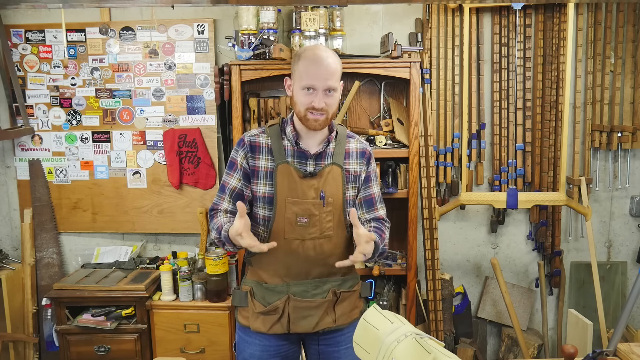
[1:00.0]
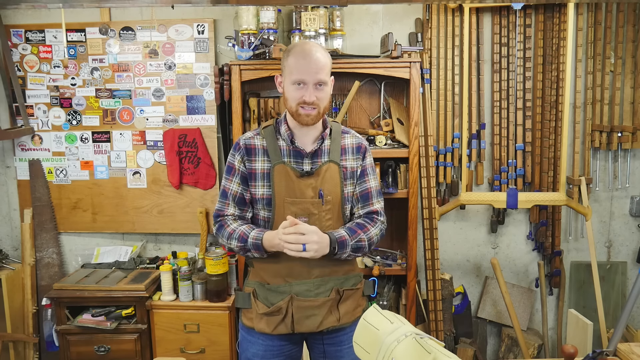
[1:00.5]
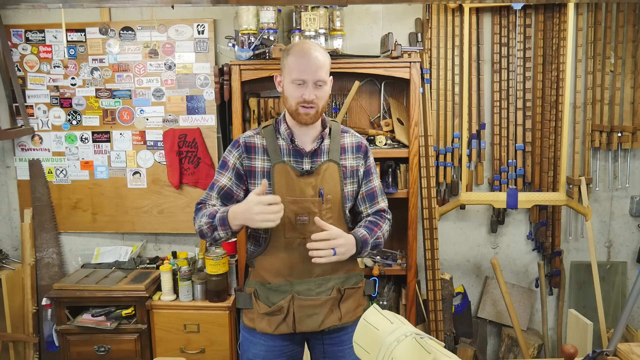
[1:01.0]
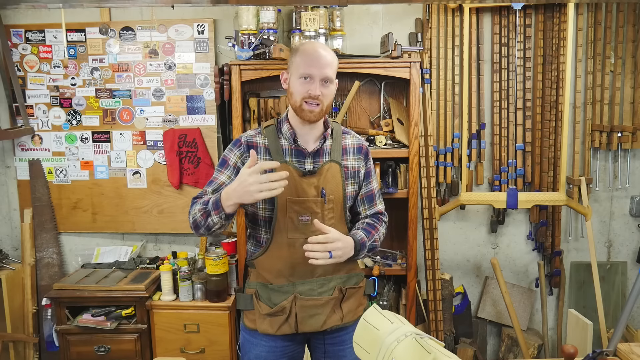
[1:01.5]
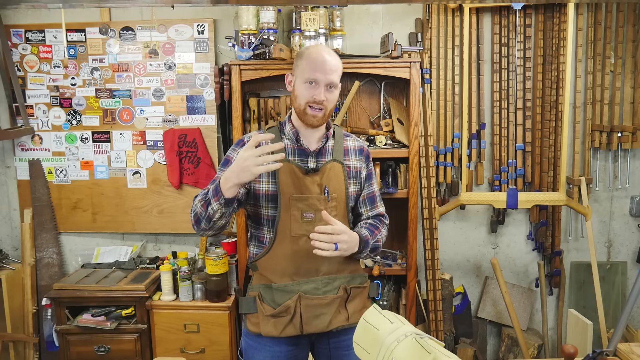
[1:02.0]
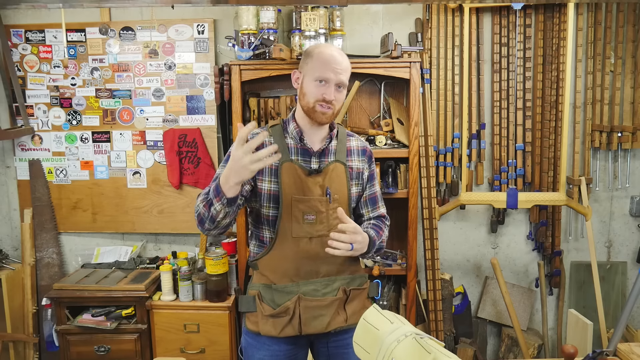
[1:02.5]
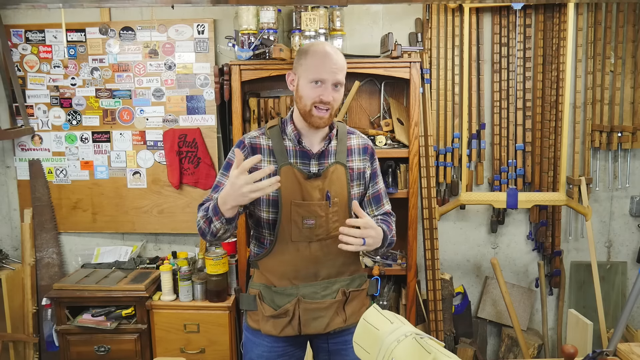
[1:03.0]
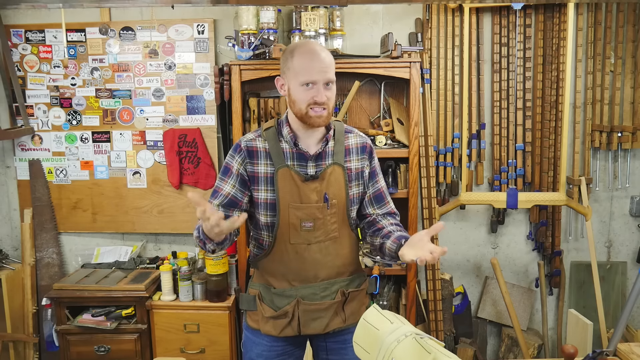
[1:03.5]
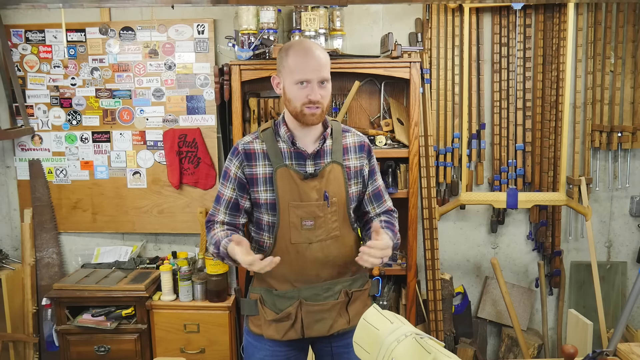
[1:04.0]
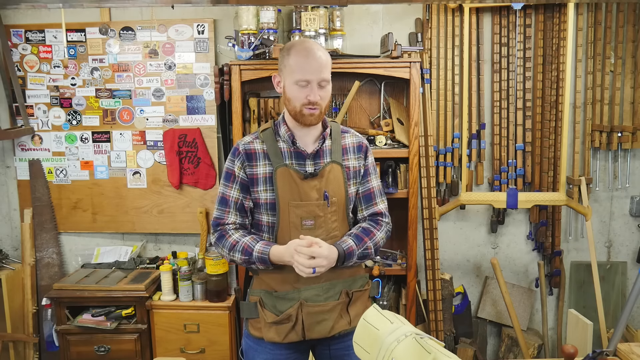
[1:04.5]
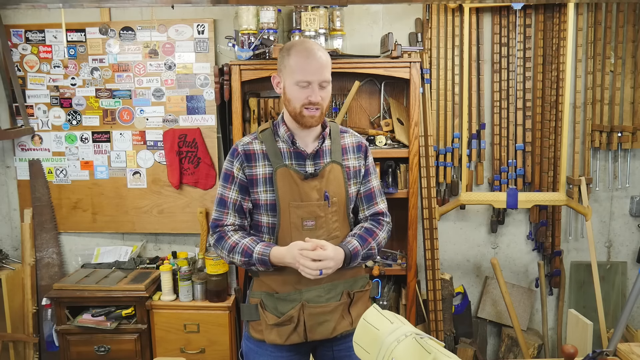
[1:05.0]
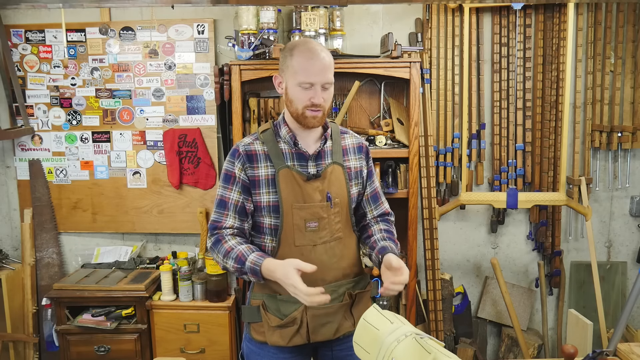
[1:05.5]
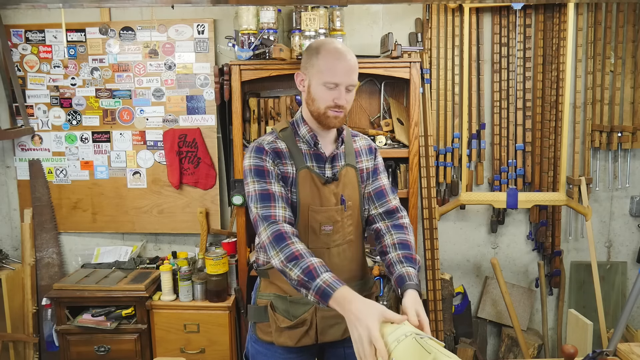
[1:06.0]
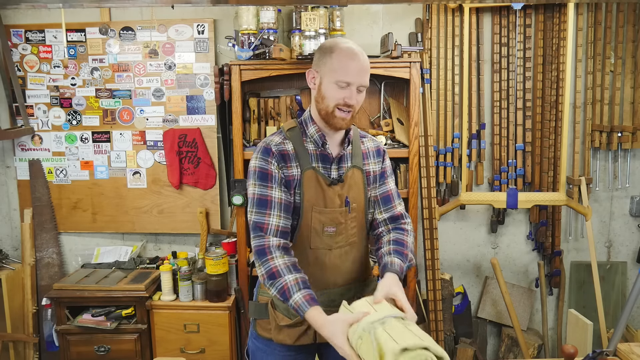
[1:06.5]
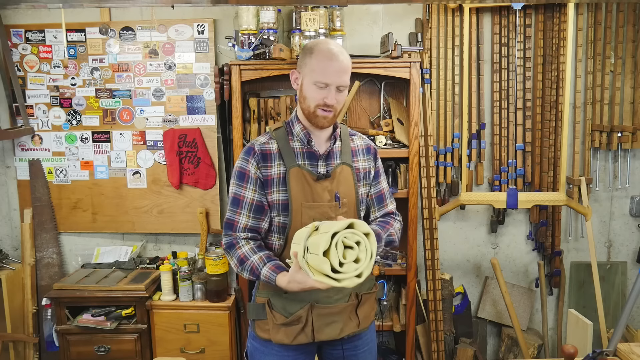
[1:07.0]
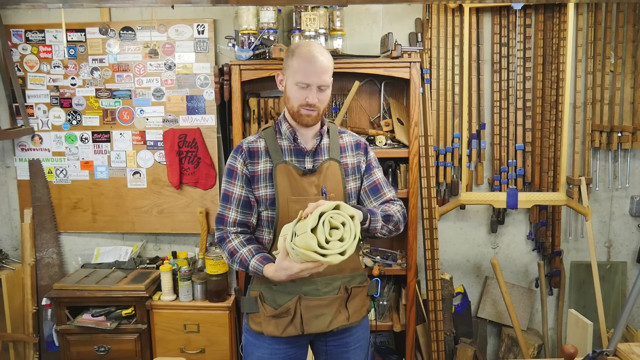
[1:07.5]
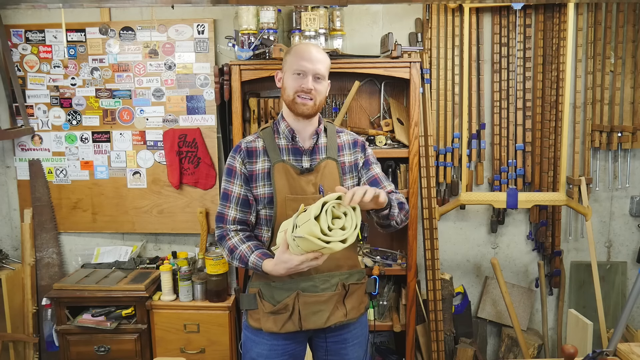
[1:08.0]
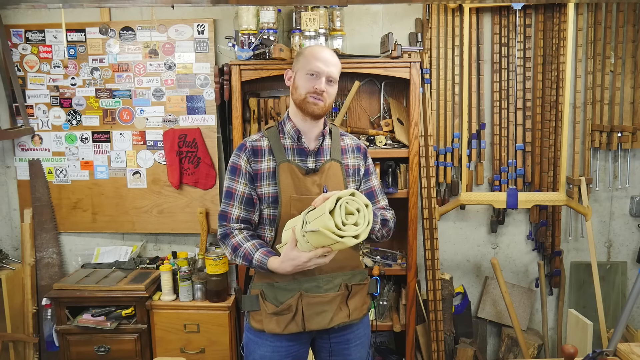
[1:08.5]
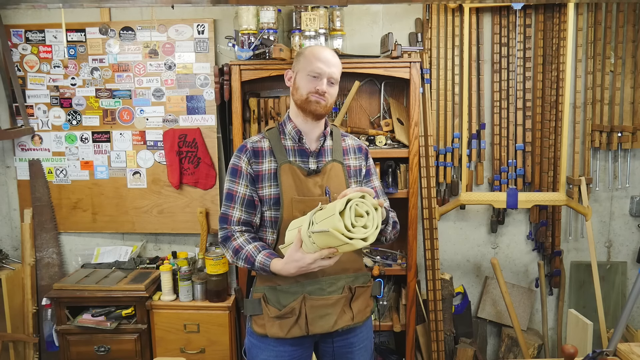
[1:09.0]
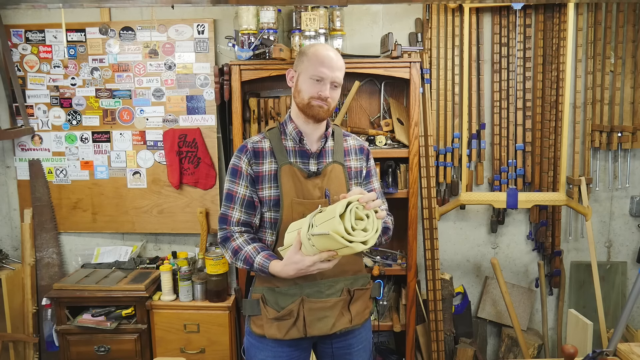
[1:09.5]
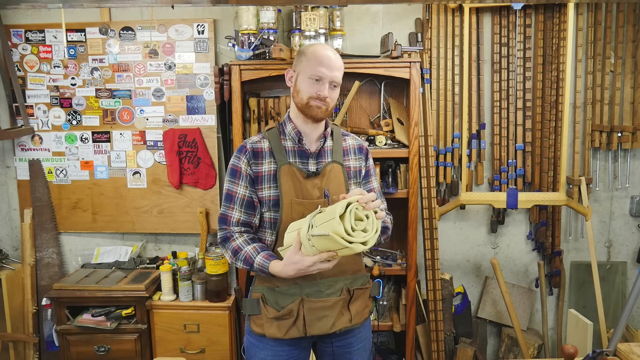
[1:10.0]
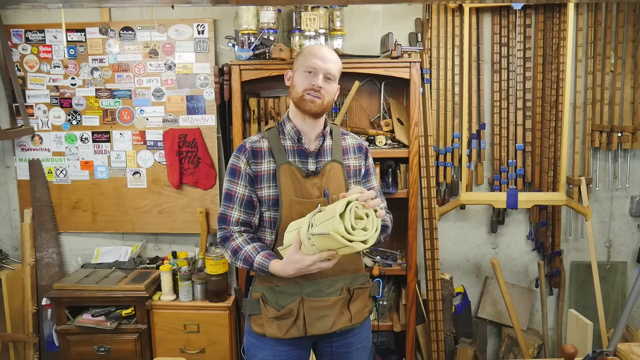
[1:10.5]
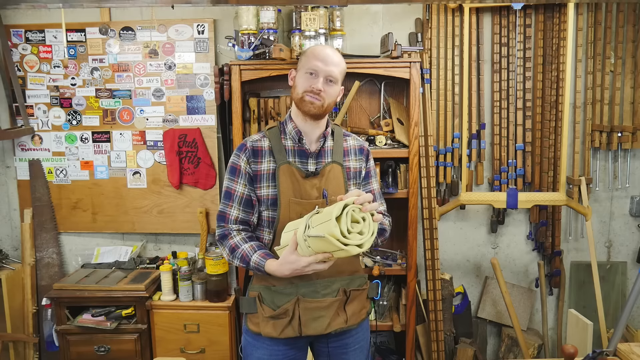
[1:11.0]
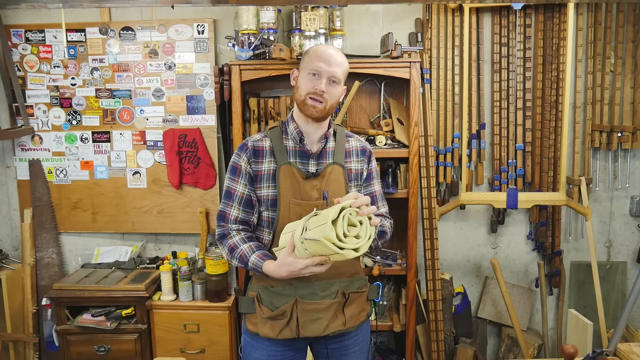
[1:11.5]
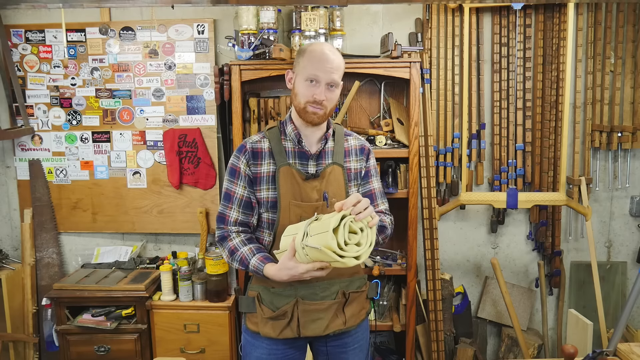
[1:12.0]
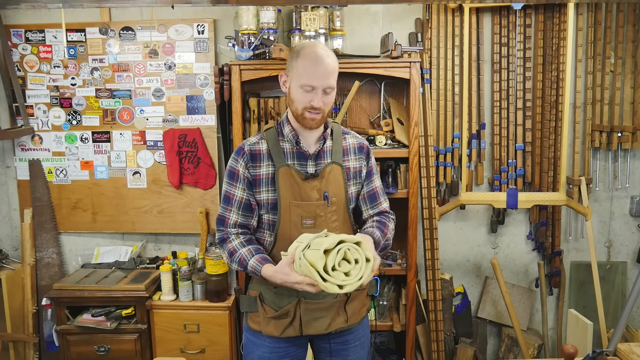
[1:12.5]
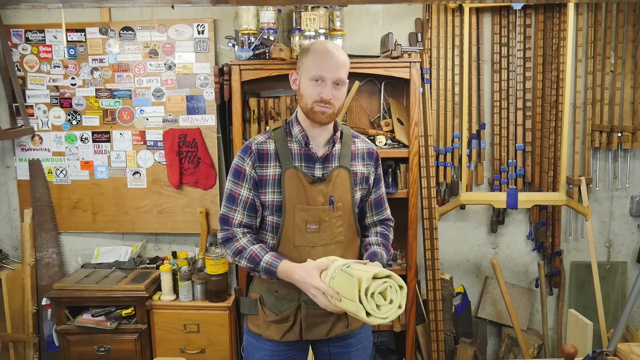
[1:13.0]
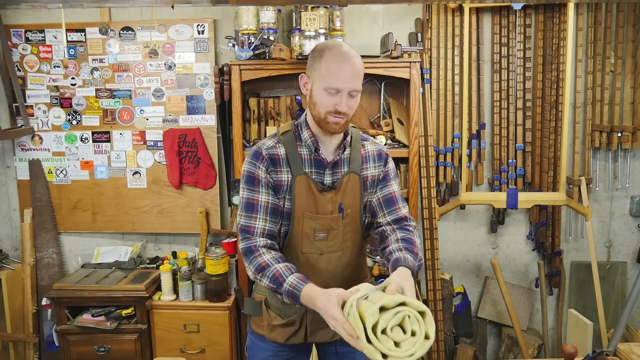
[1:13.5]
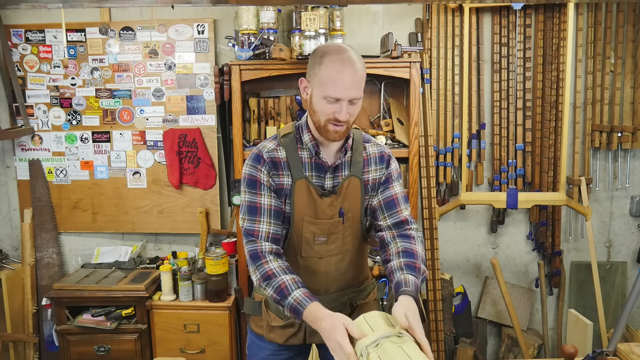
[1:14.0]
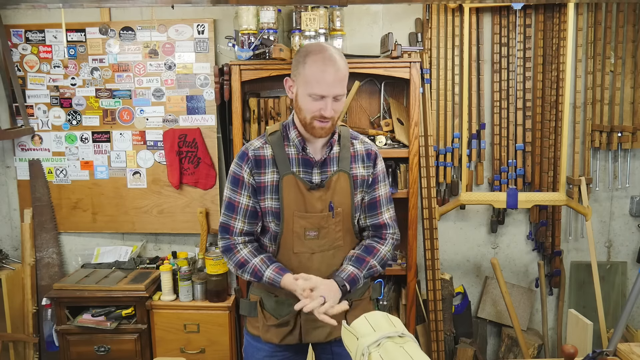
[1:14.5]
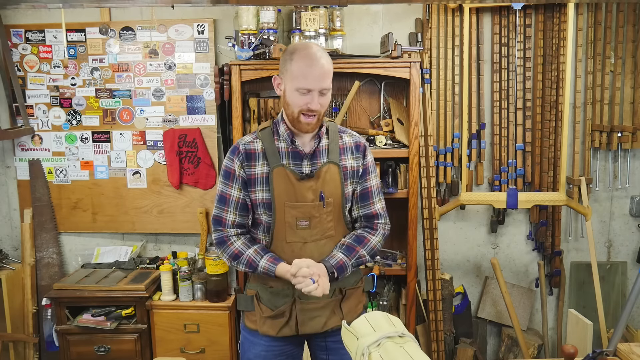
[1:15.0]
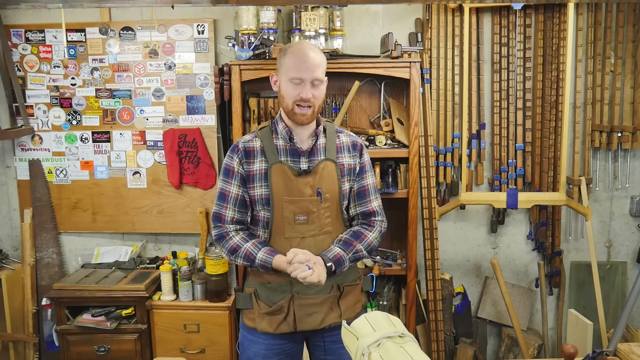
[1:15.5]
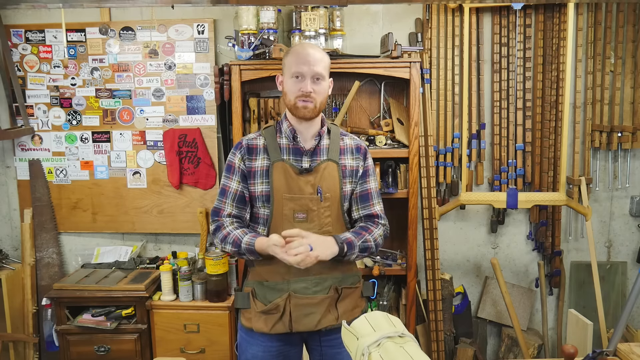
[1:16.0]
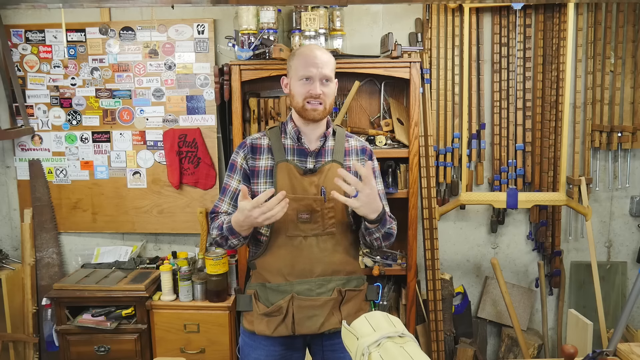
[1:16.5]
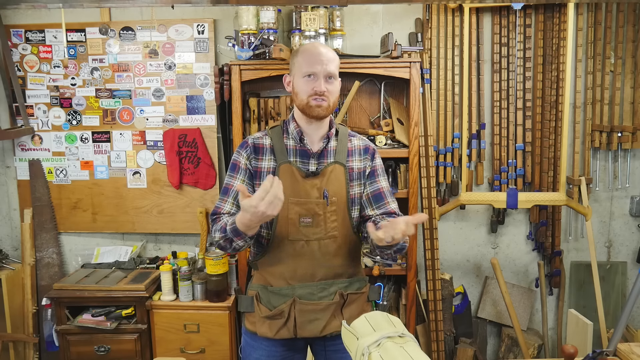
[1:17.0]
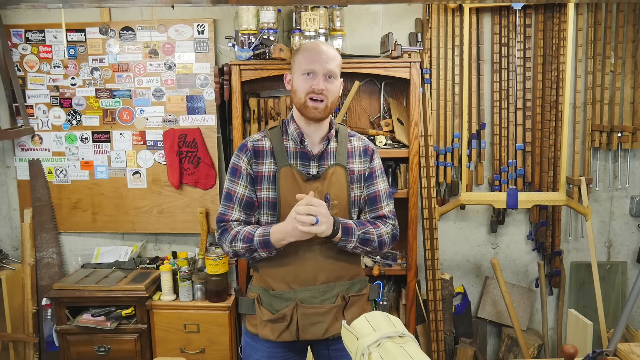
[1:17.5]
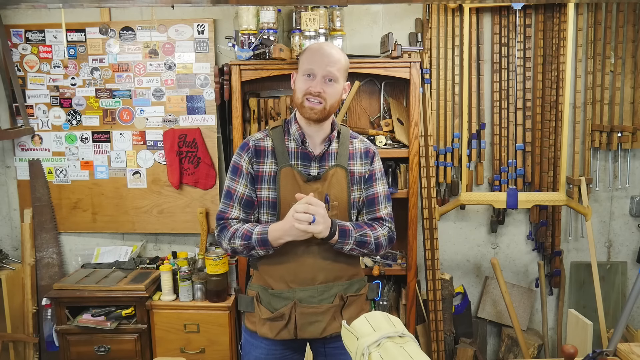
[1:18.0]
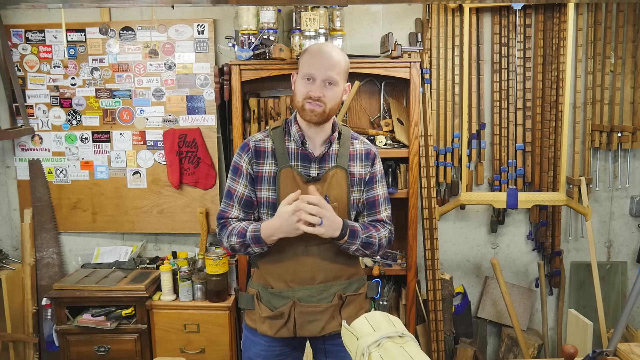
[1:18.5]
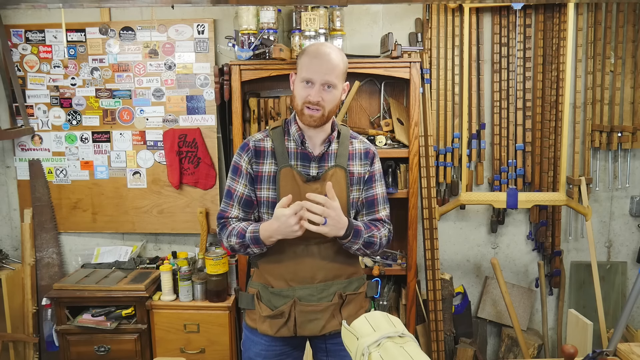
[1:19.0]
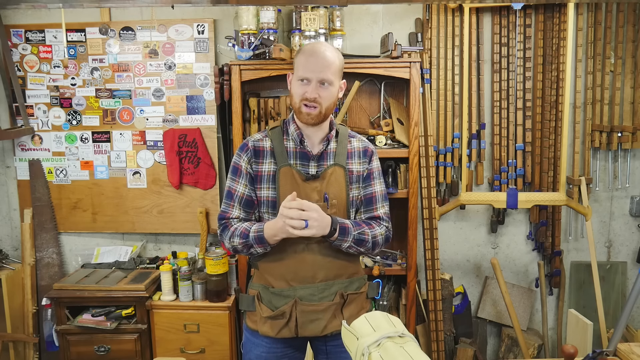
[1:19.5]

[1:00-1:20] While talking, the man holds up his materials and shows them. The setting is indoors, inside a house, with wood right behind him and products he has made on display.